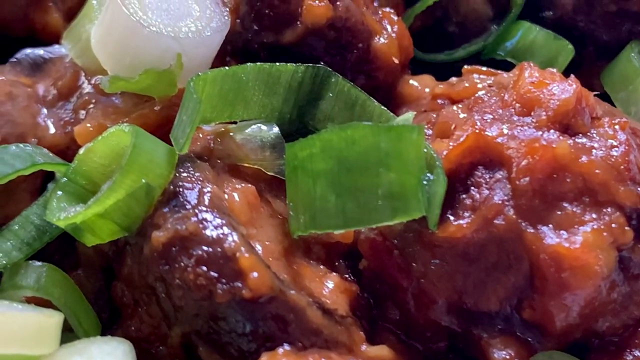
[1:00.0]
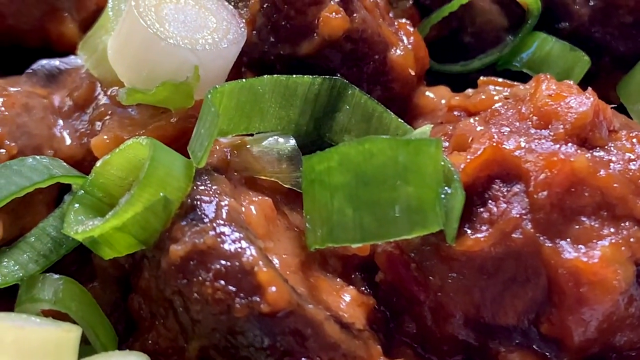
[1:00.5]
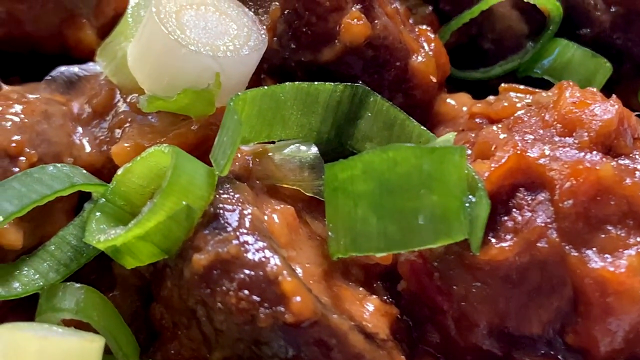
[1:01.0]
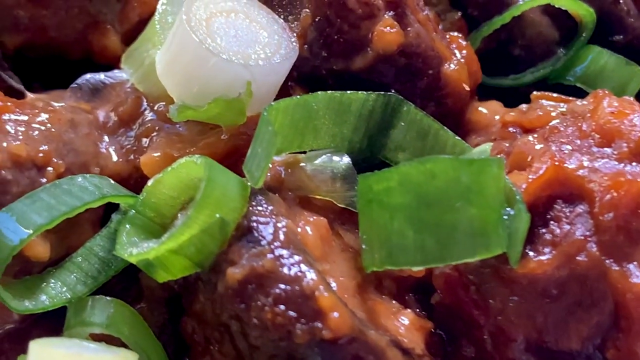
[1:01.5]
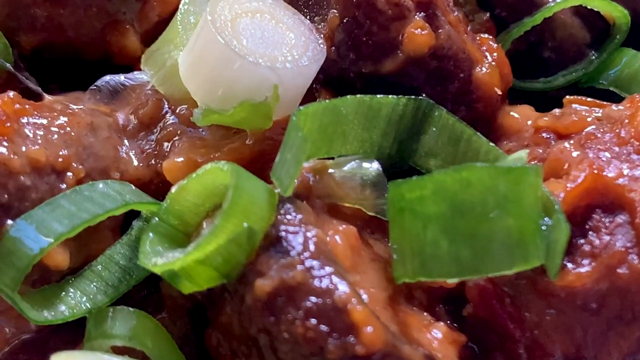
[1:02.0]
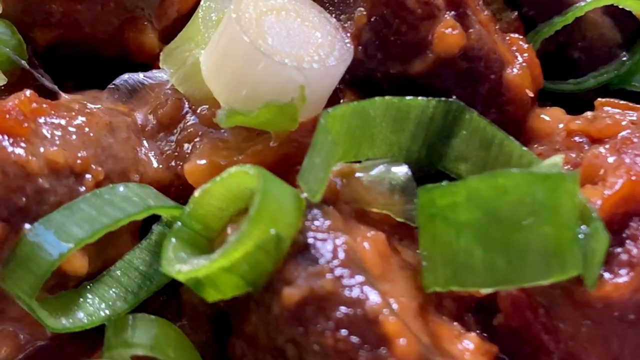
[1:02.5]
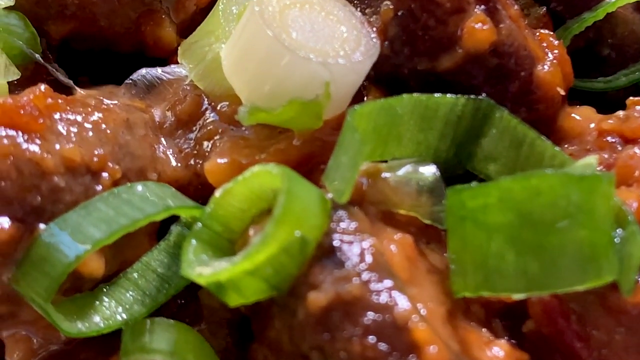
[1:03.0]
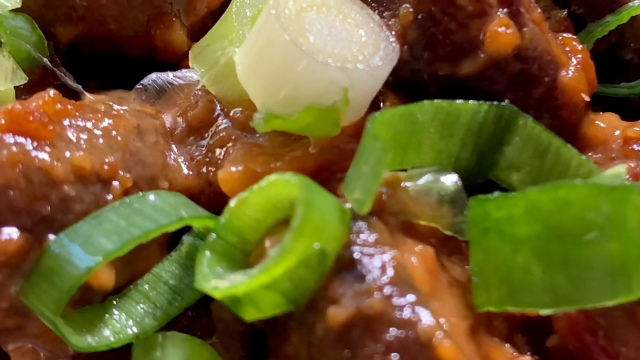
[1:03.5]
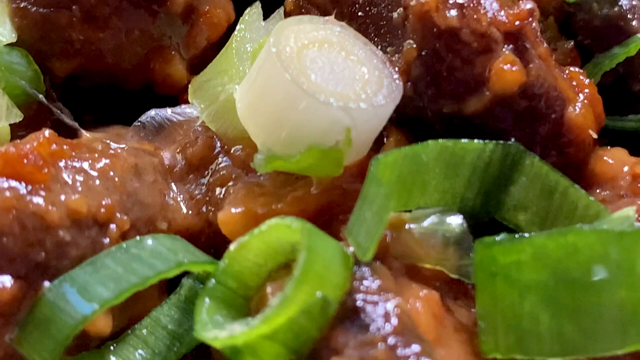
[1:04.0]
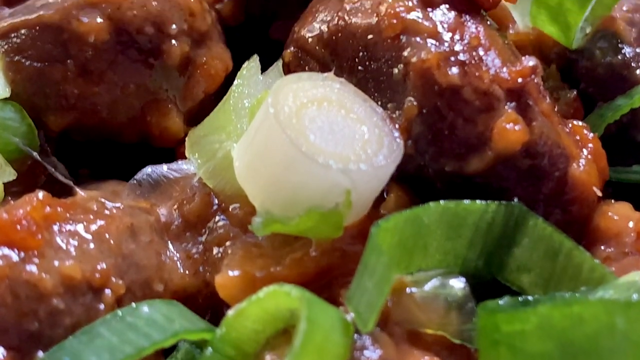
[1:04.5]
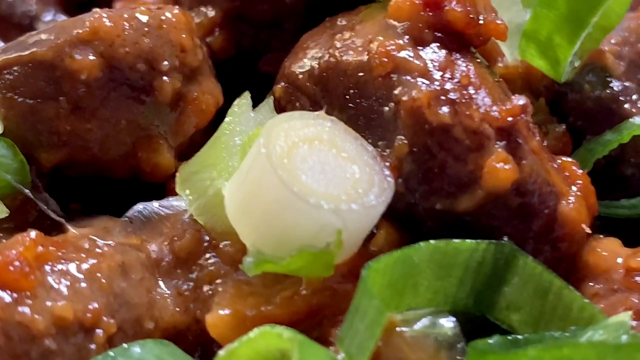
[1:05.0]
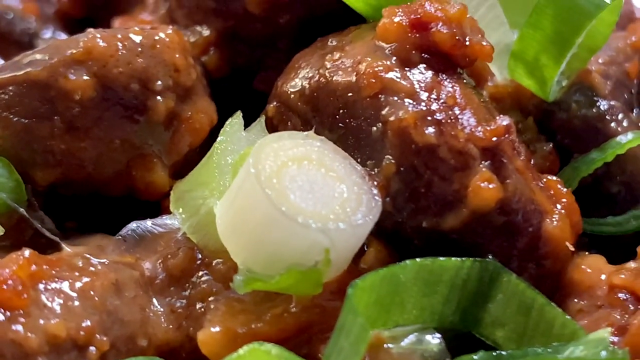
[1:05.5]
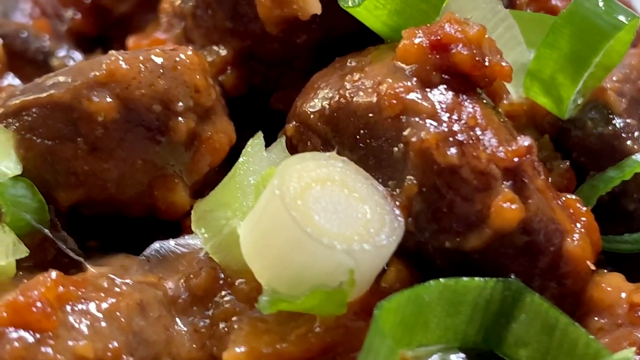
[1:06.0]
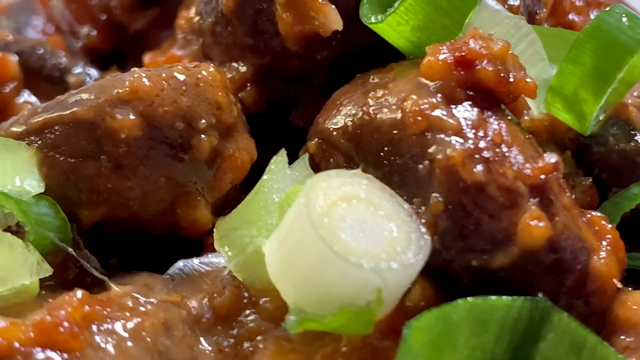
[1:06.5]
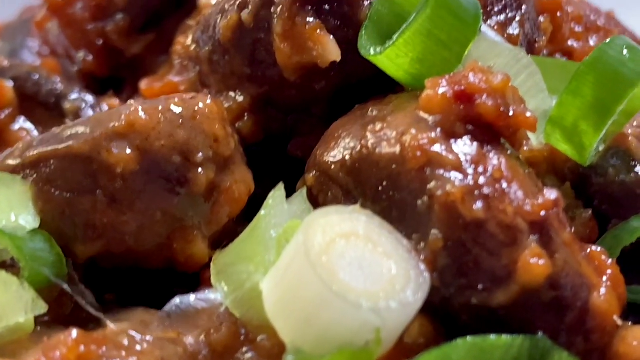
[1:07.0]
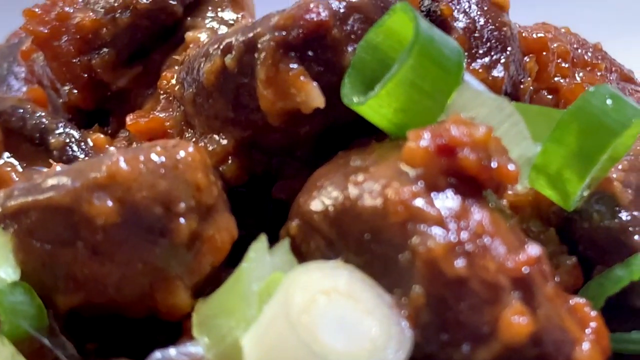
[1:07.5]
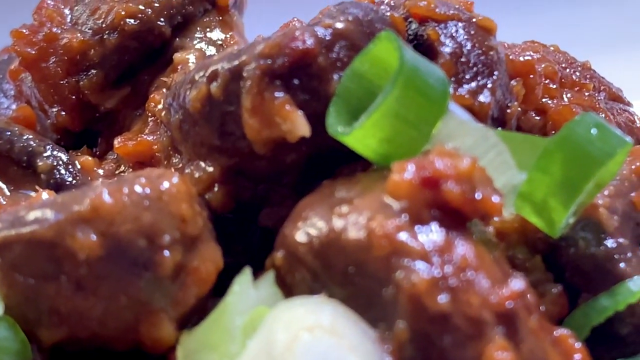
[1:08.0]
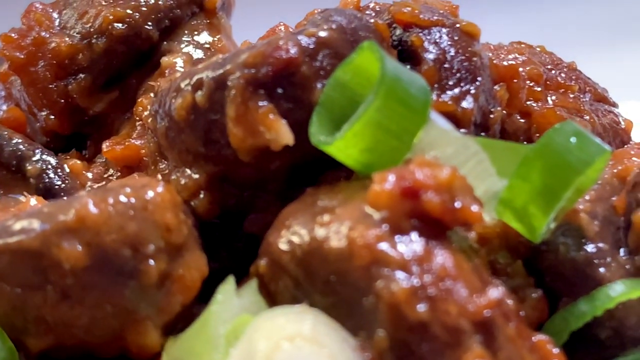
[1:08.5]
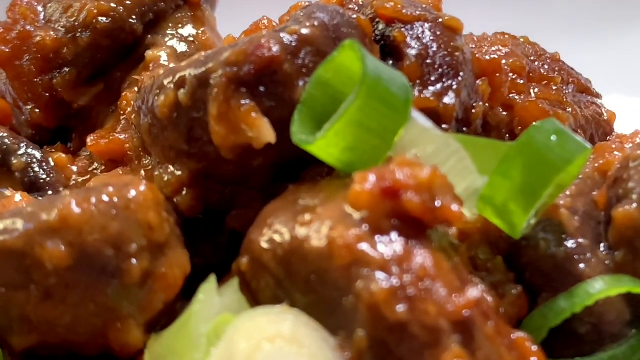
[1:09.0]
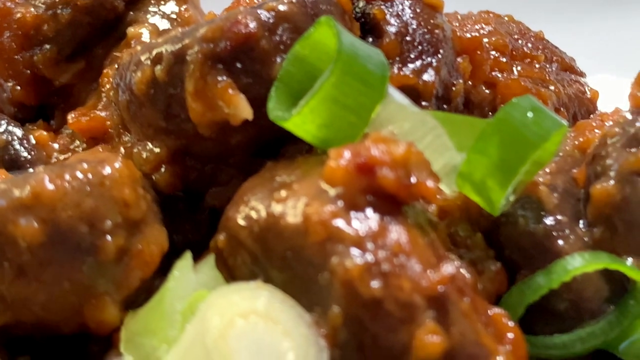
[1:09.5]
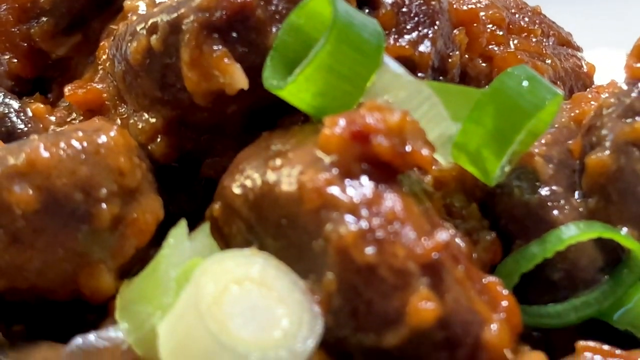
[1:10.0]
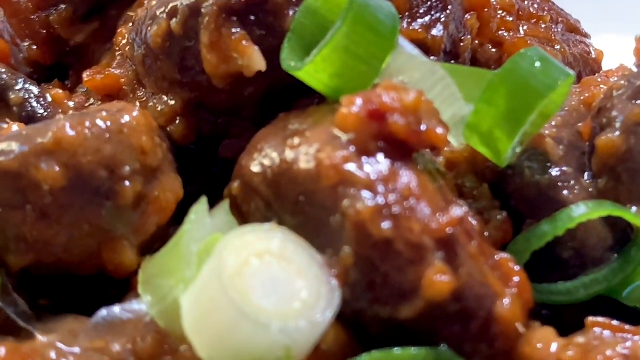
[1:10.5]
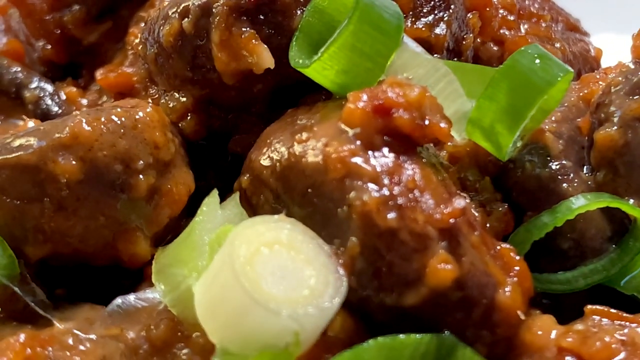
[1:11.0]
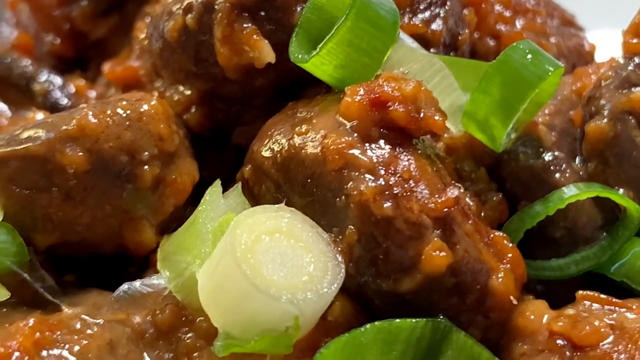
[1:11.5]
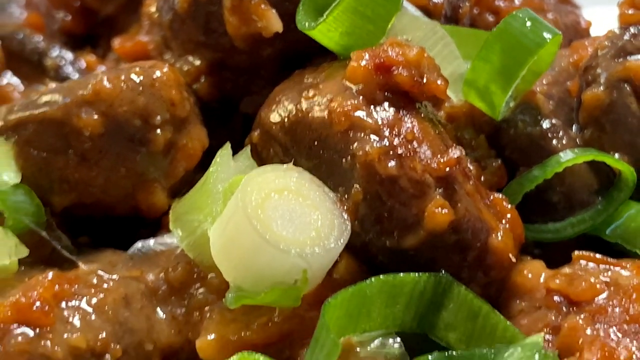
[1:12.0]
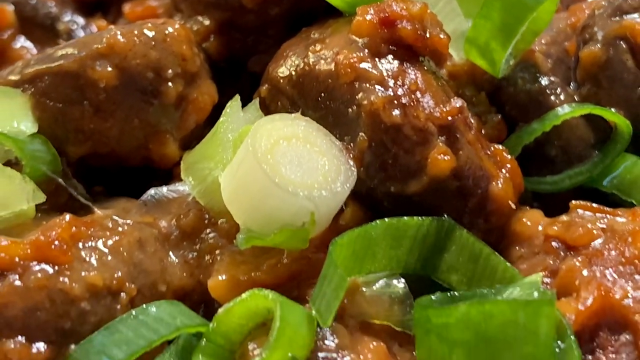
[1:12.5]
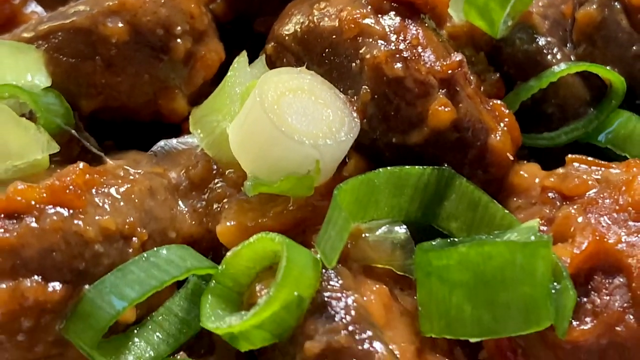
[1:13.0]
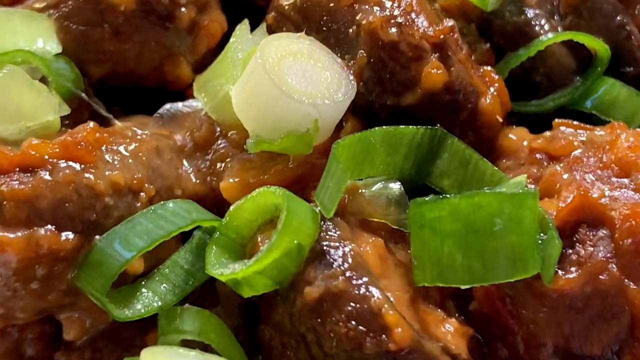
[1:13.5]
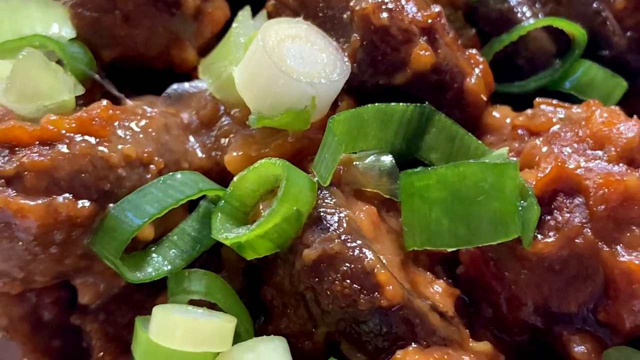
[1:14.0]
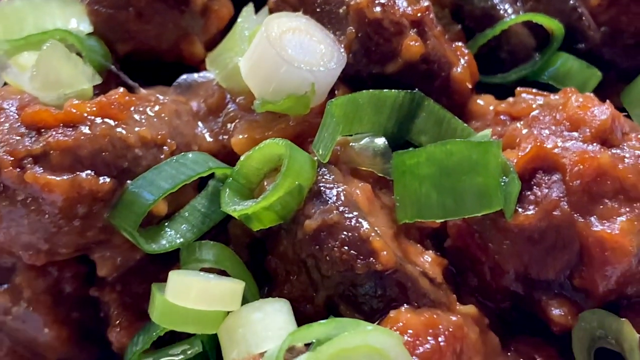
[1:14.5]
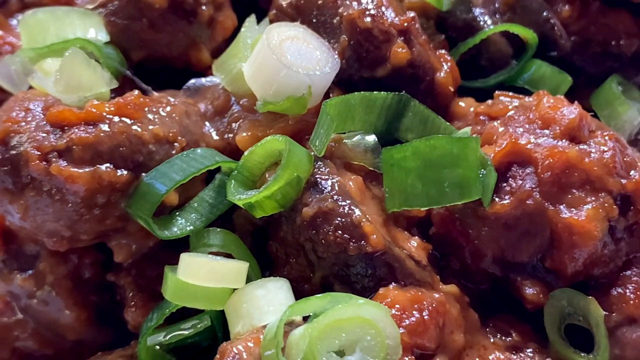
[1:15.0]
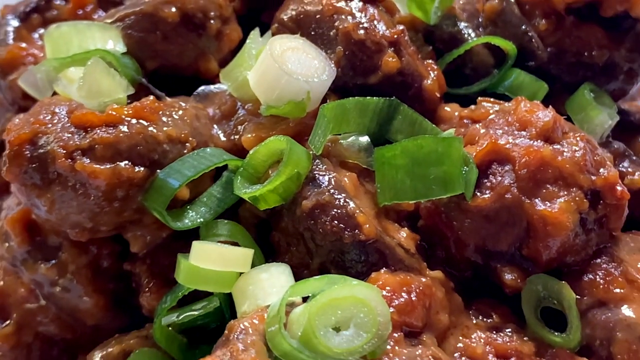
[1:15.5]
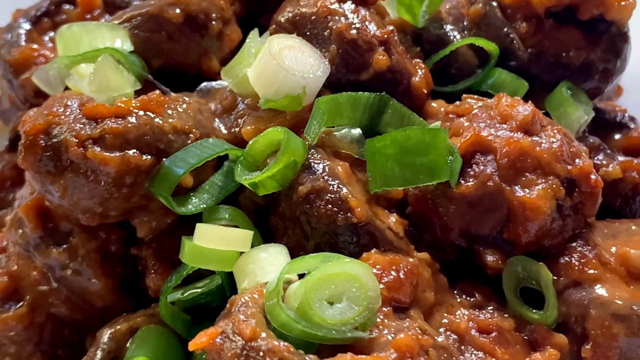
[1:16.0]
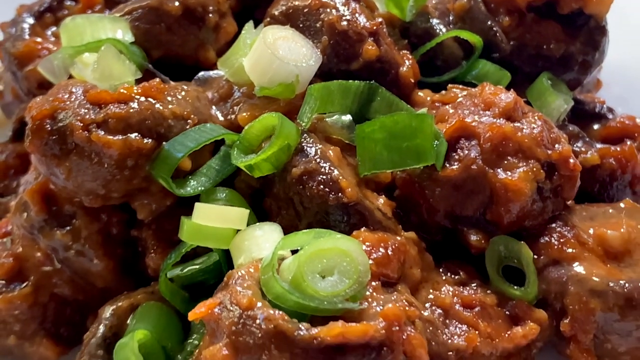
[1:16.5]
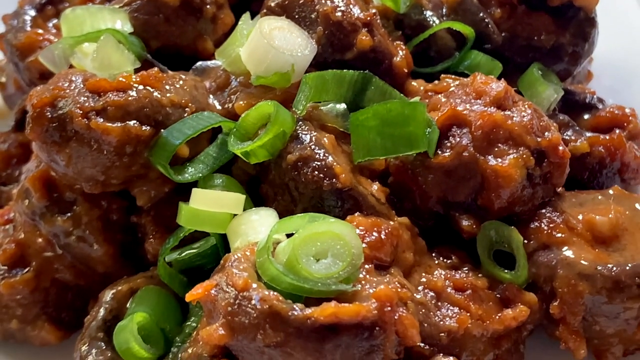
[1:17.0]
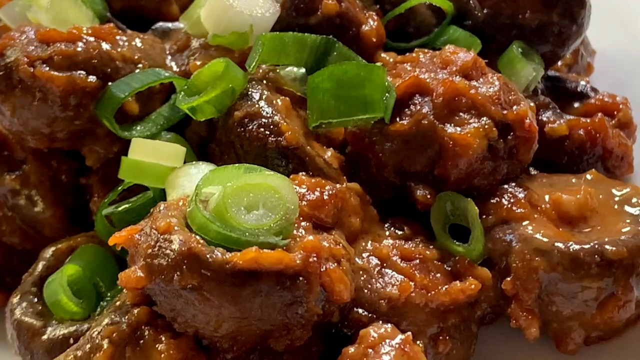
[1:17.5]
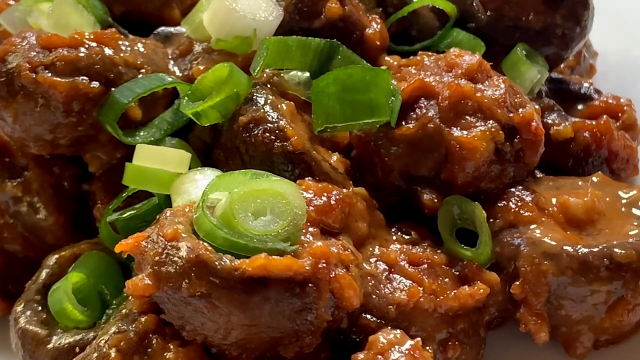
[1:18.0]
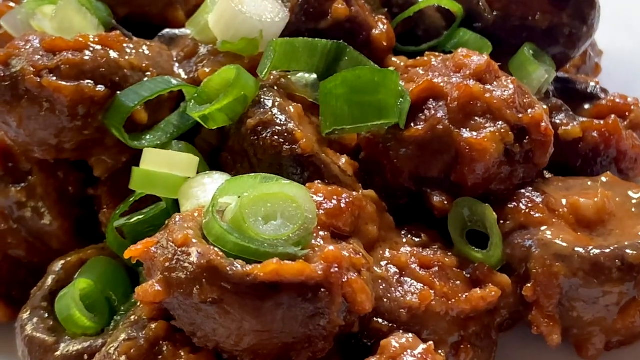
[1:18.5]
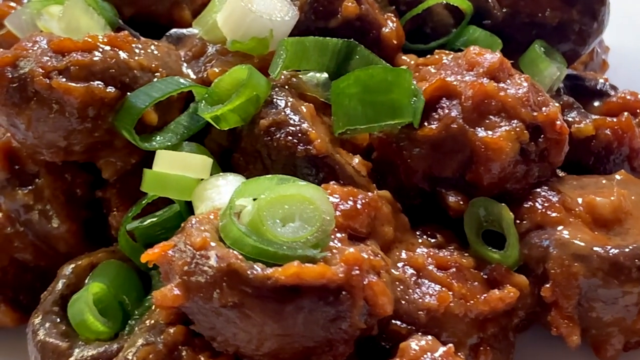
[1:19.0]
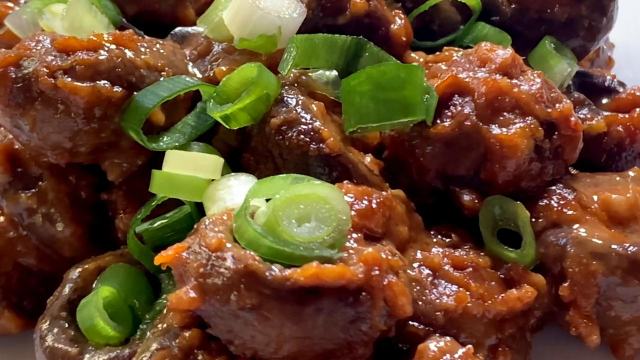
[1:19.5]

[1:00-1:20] The dish looks to be fully prepared: mushrooms in peanut butter sauce covered in scallions or green onions. The camera pans slowly over them from the bottom to the left and then back up towards the right, giving a close look at the texture of the sauce and the mushrooms. The camera then kind of moves back a little to show the full dish before beginning to zoom in again on the details. The mushrooms look like they have reduced quite a bit and are kind of shriveled, and the sauce has thickened to a kind of syrupy texture, looking like it has maybe even caramelized a little, and it clings to the mushrooms. The mushrooms sort of look like chicken wings because of the thick sauce sticking to them. On top, the green onions include very thin, ribbon-like strands of green as well as more solid white medallions.